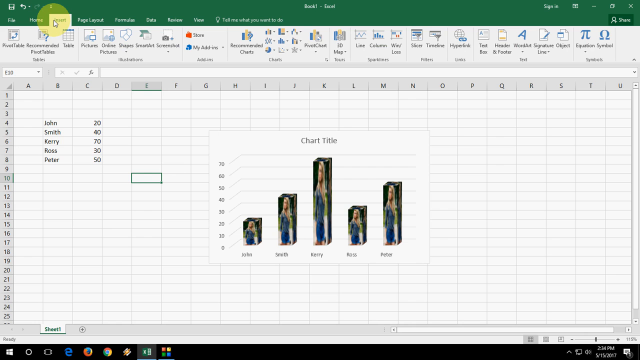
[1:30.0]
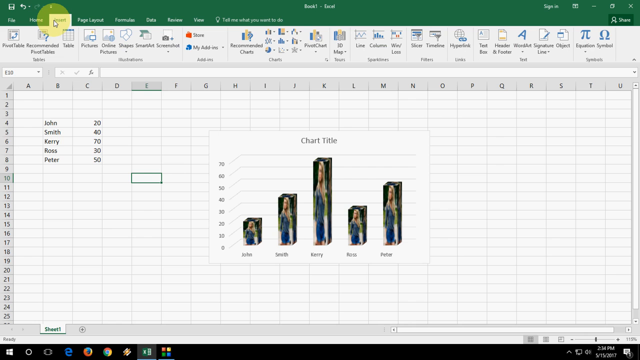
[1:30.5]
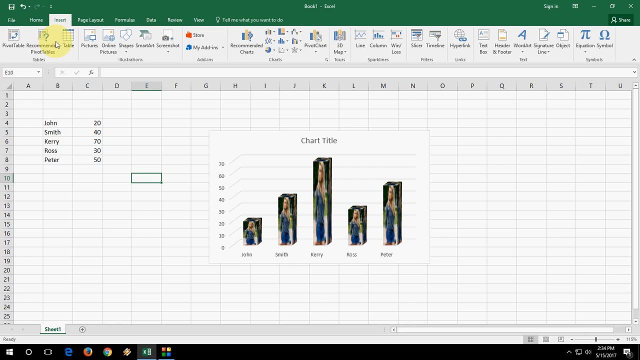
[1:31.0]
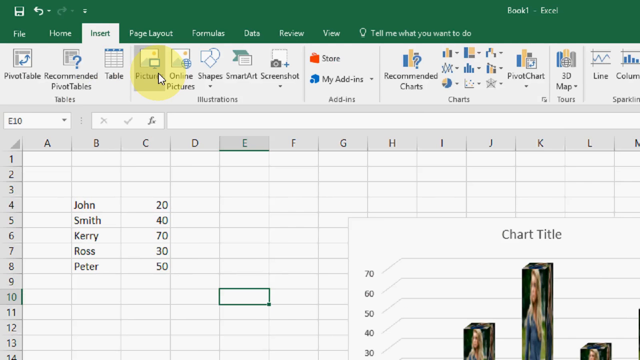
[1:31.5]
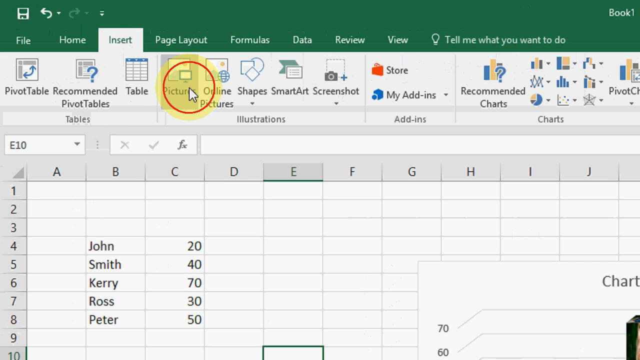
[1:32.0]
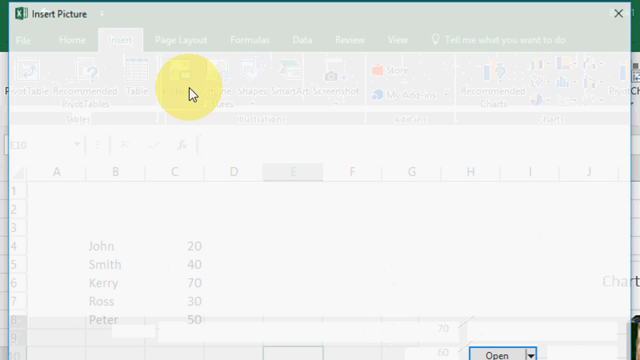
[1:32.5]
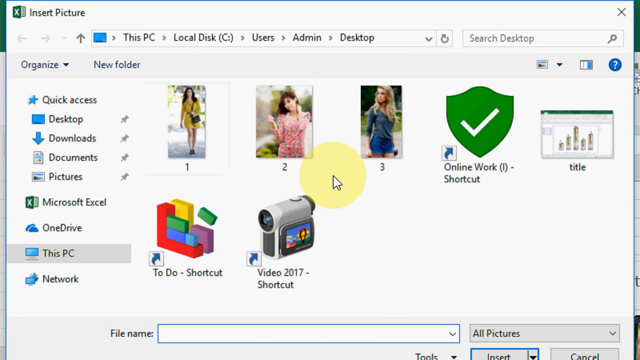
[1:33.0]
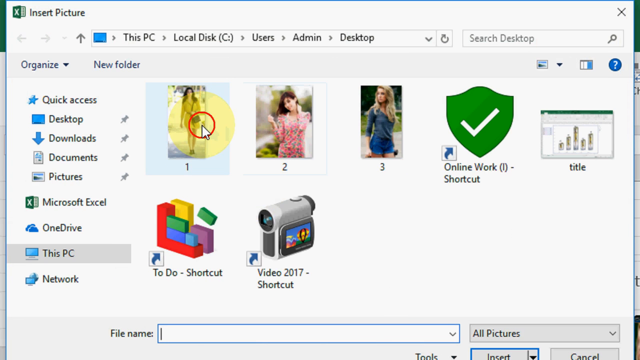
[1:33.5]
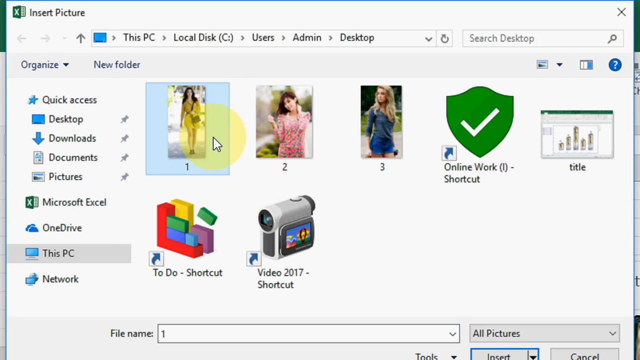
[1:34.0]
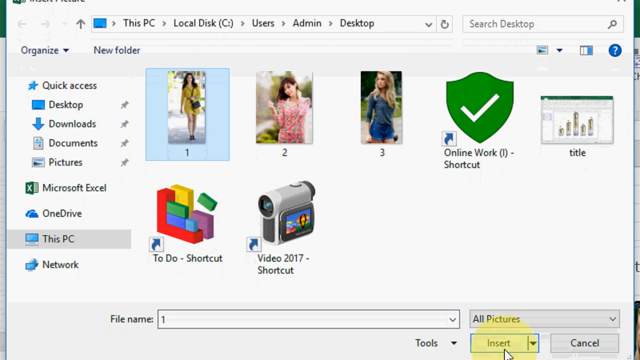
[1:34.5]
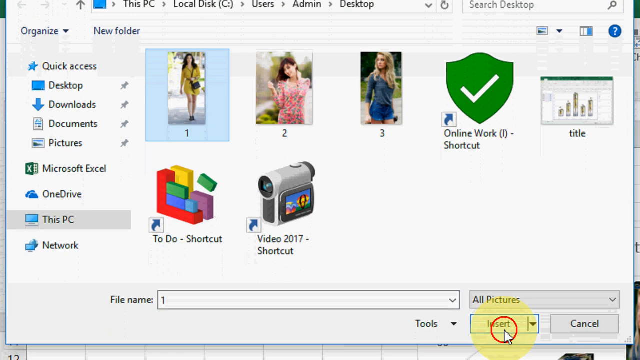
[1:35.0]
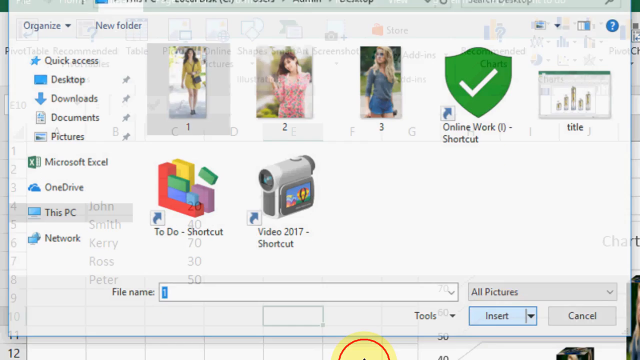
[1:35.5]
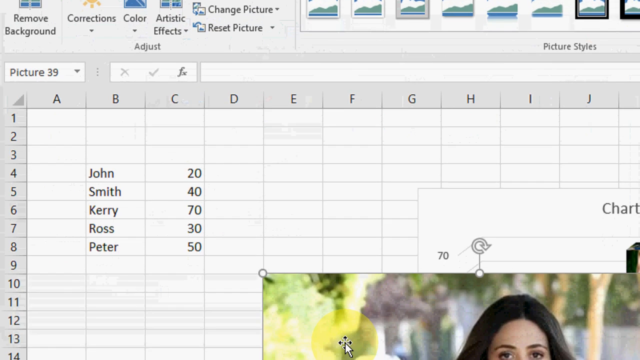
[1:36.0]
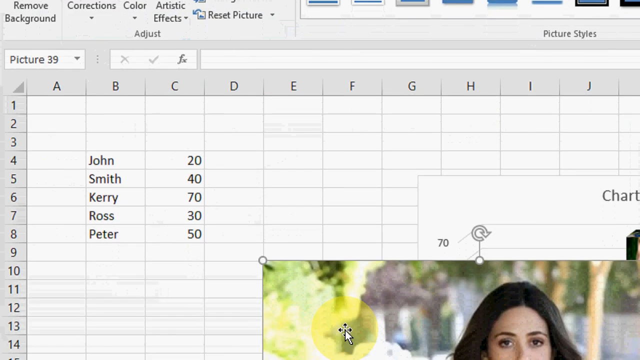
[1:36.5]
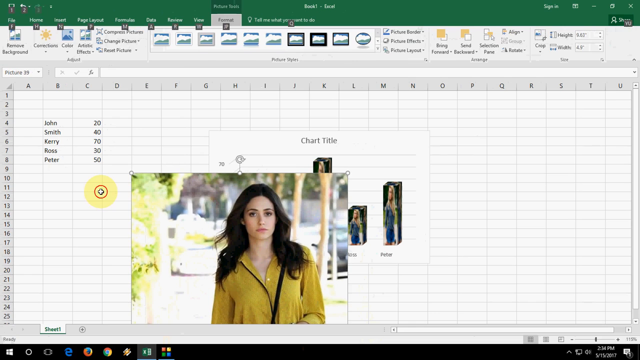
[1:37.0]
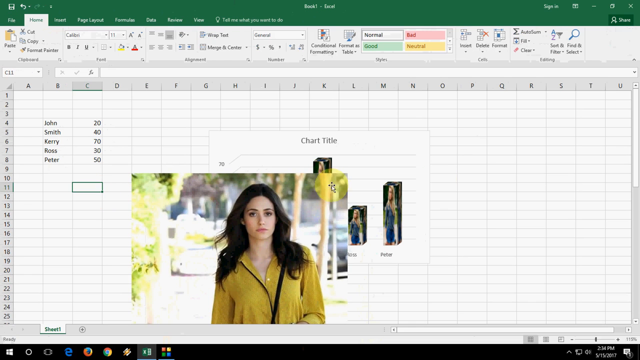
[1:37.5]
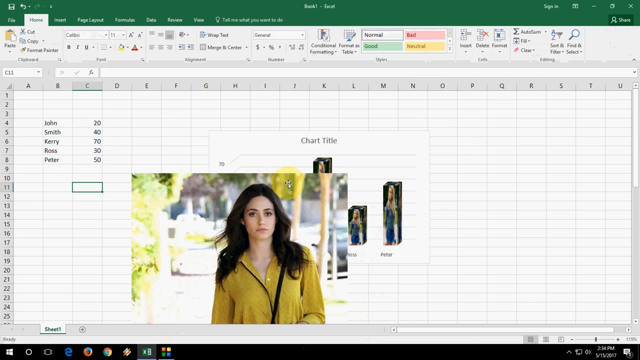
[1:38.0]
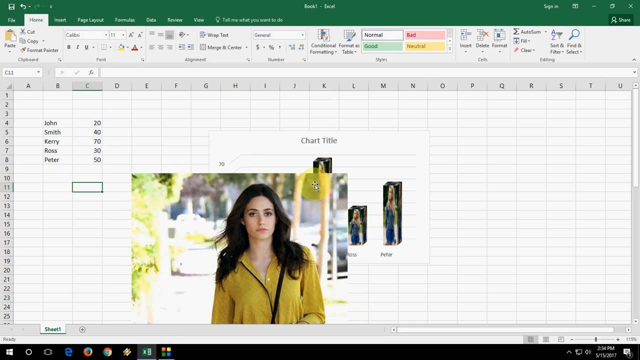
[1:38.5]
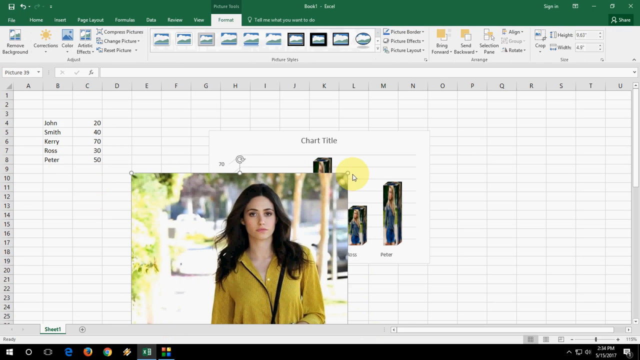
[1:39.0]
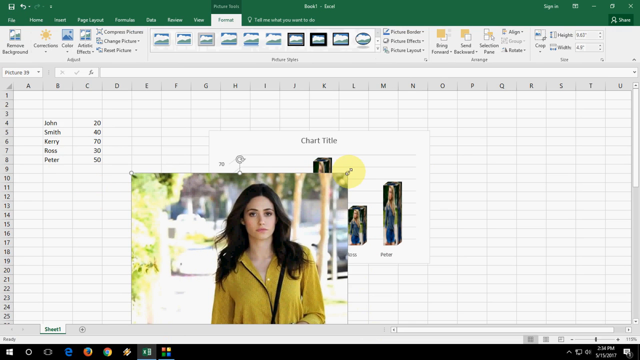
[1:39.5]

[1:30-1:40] A Windows Excel spreadsheet is on a Windows PC monitor, with columns labeled A through U and rows numbered 1 through 25. Rows 4 to 8 in column C hold the names John, Smith, Kerry, Ross and Peter, followed by numbers to their right, from top to bottom 20, 40, 70, 30 and 50. In the middle of the spreadsheet is the chart title, which contains the names matched to the numbers on the chart. They are represented by columns of different heights, each carrying the same photograph of the same woman. The cursor goes to the PC's Photographs section and grabs and drags a photograph.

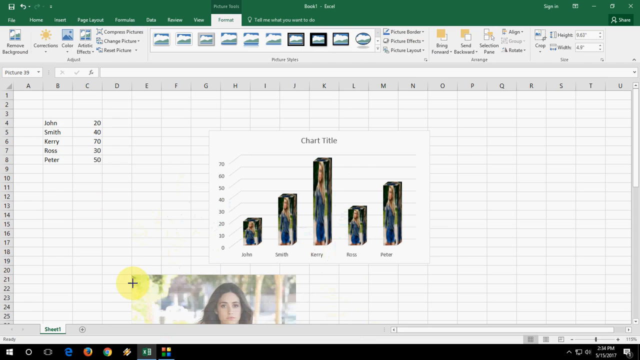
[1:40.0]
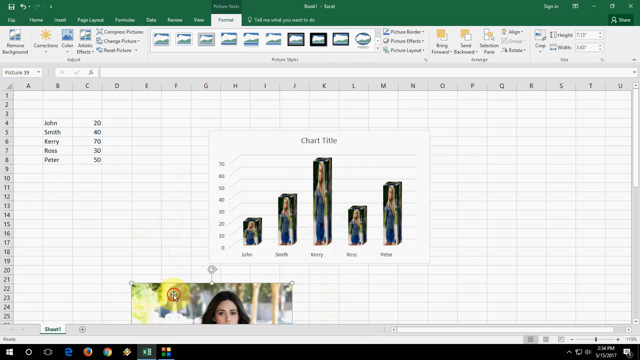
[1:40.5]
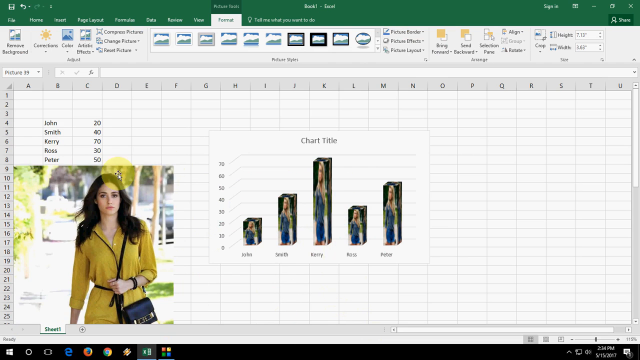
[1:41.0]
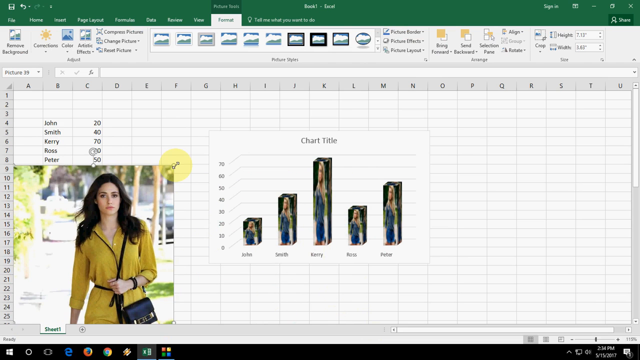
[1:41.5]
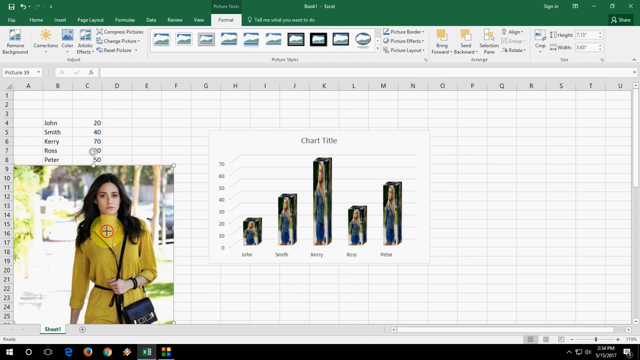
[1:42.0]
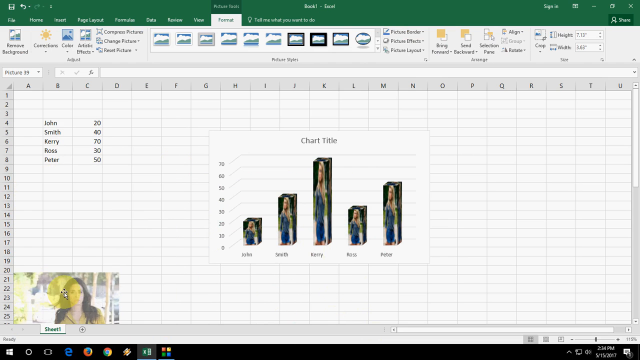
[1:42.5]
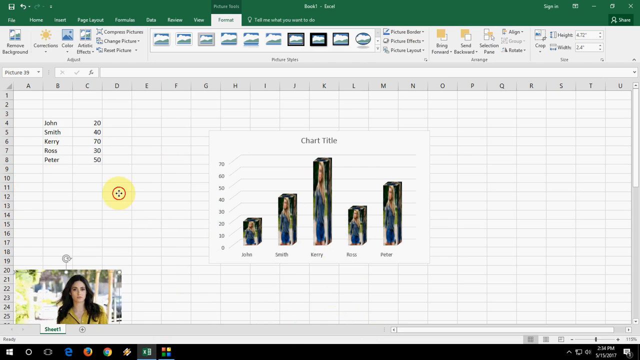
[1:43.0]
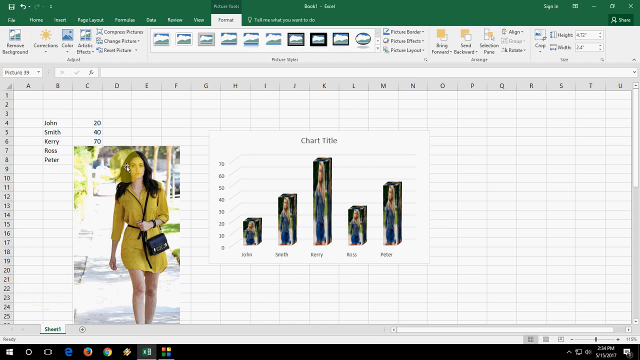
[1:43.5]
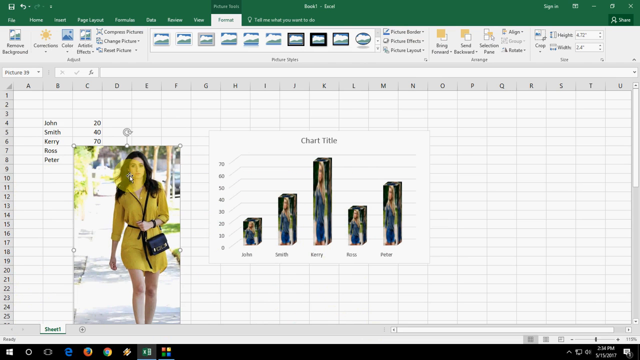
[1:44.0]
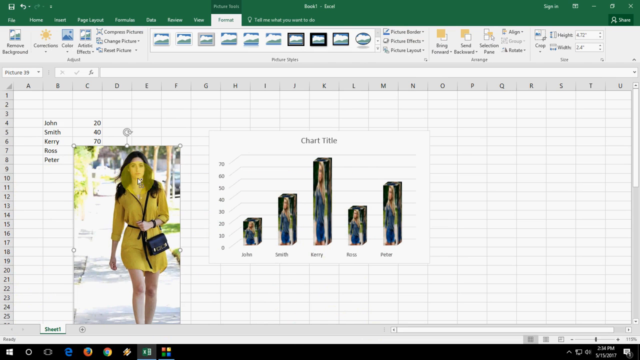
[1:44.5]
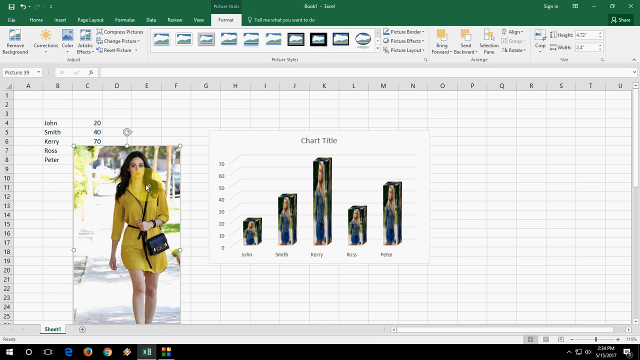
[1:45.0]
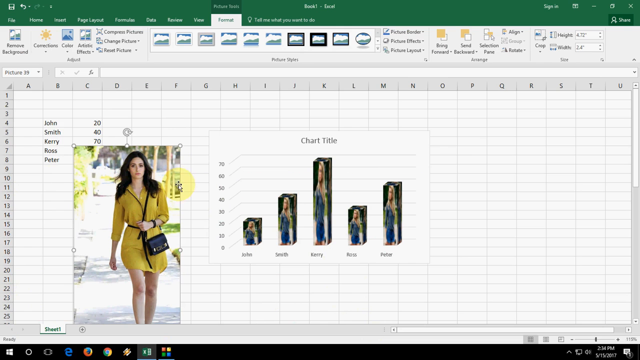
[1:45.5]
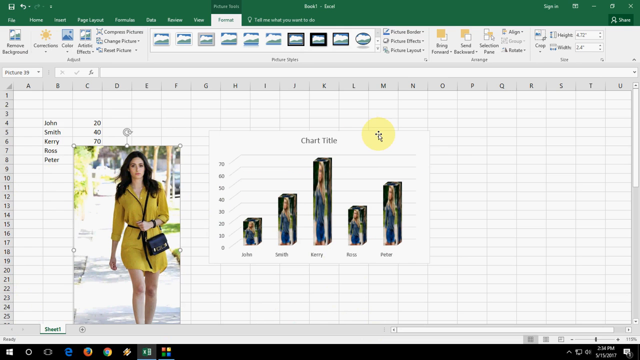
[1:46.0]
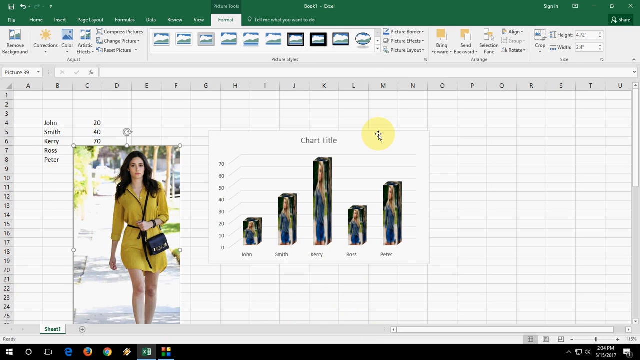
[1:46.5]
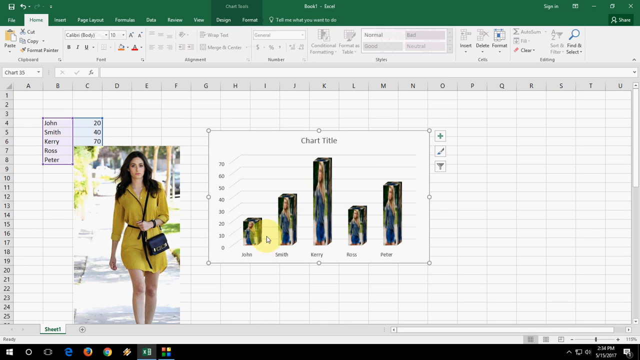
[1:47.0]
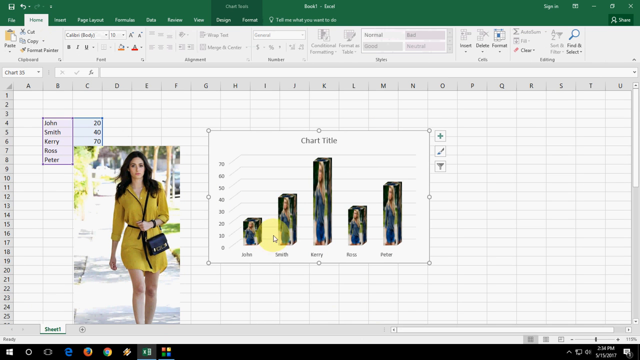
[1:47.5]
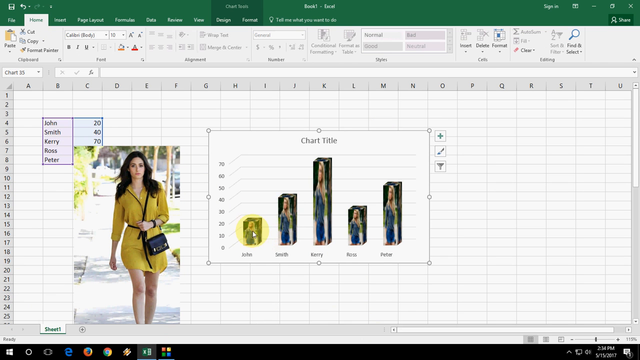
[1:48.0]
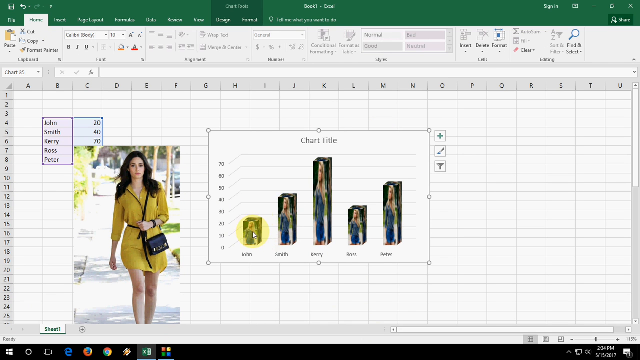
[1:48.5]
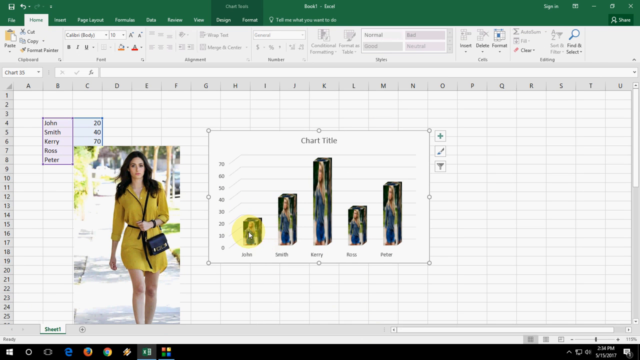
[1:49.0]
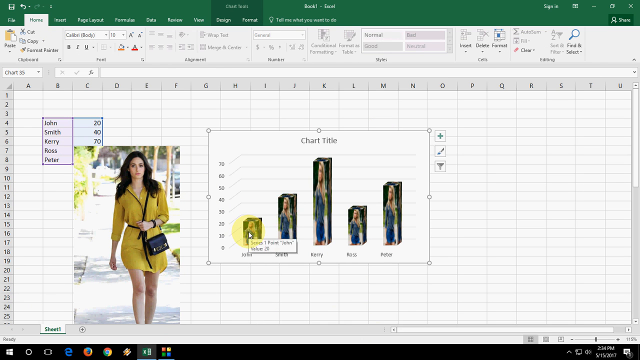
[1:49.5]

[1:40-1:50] A Windows Excel spreadsheet is on a Windows PC, with entries in rows 4 to 8 and columns B and C. They are names and numbers, from the top: John 20, Smith 40, Kerry 70, Ross 30, Peter 50. A pop-up box in the middle is titled "chart title" and has five columns represented by the names from the spreadsheet, each with the image of the same woman on it, and numbers on its left that correspond to the spreadsheet numbers. A cursor grabs and drags photographs and matches them to a name on the spreadsheet and on the chart.